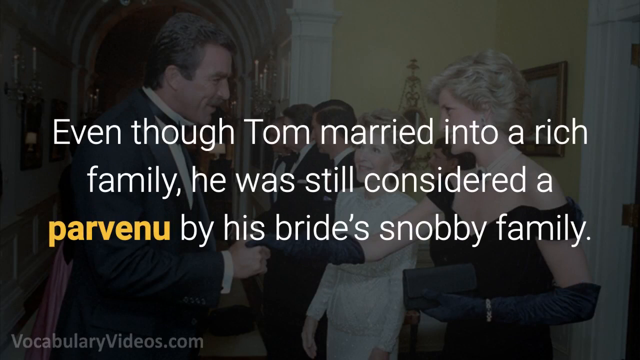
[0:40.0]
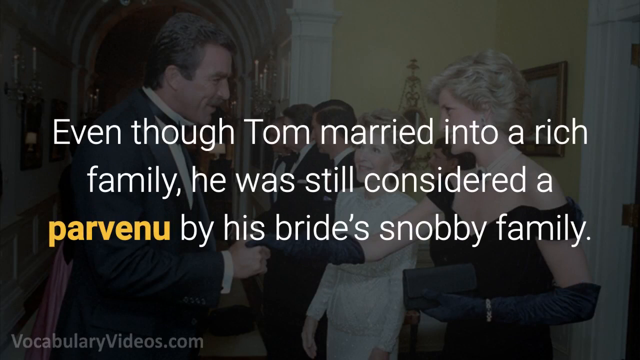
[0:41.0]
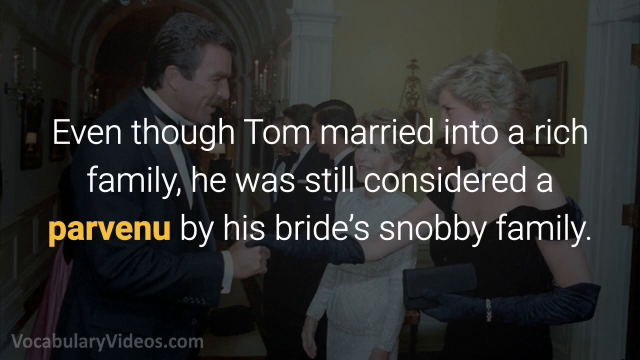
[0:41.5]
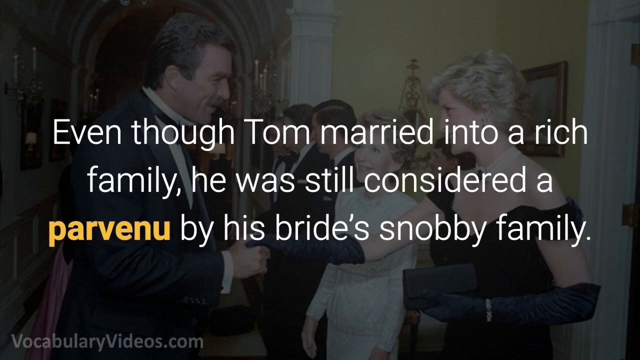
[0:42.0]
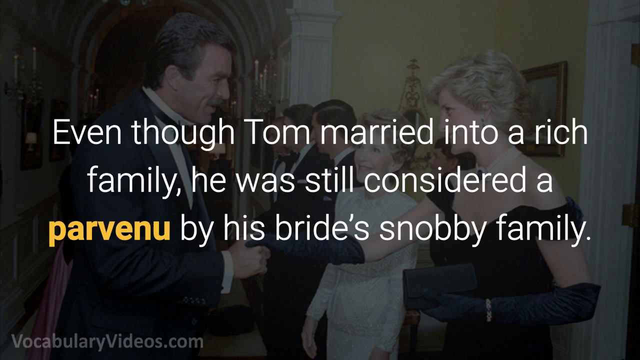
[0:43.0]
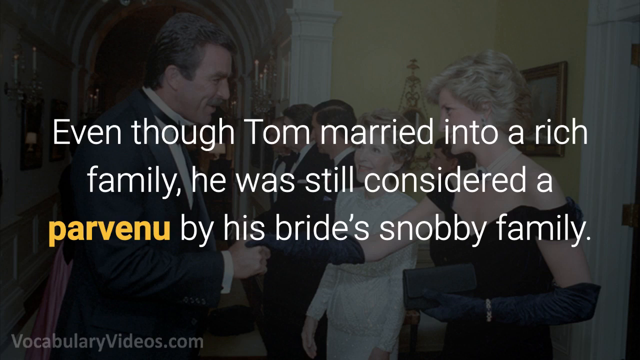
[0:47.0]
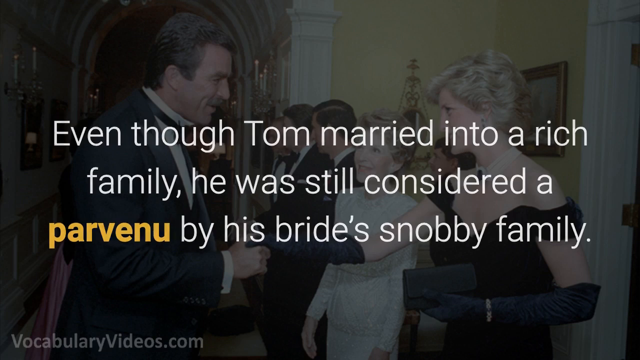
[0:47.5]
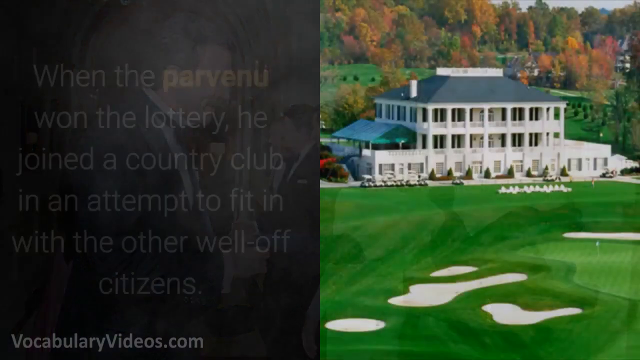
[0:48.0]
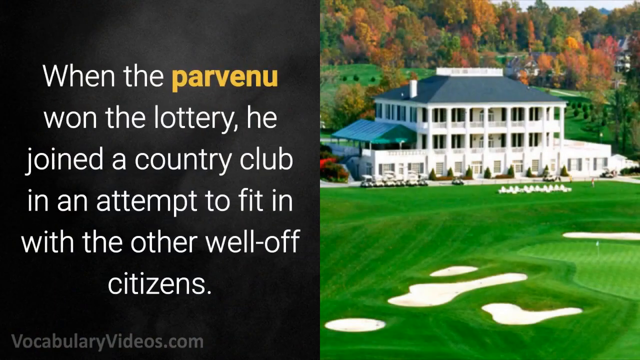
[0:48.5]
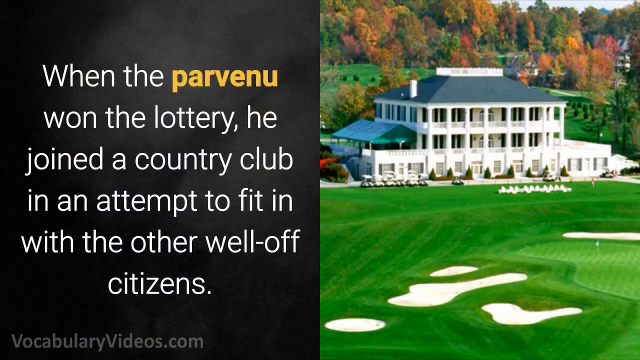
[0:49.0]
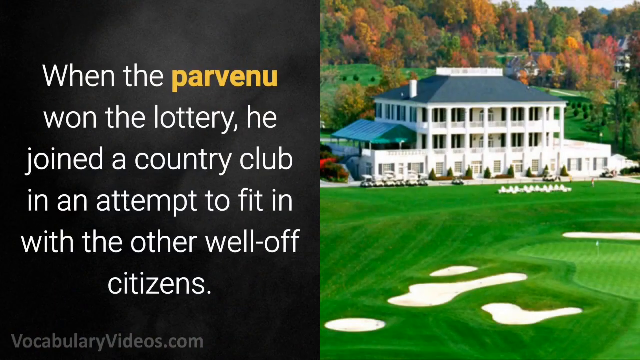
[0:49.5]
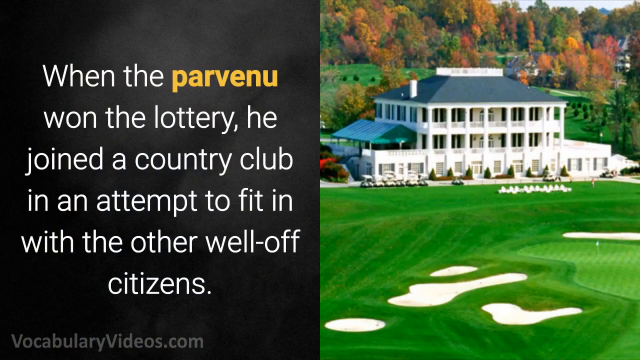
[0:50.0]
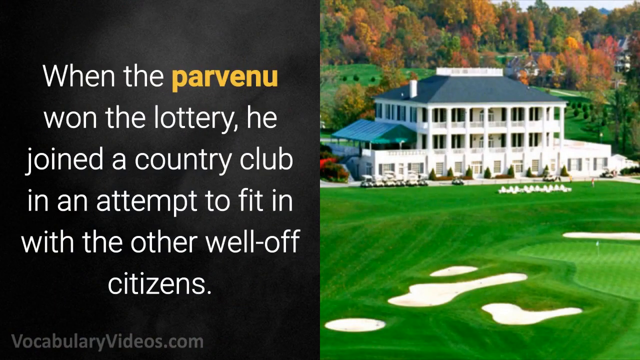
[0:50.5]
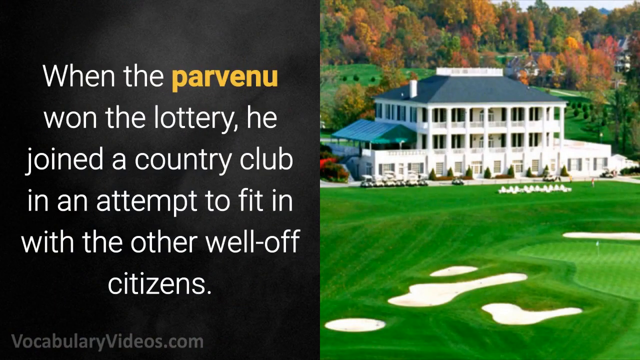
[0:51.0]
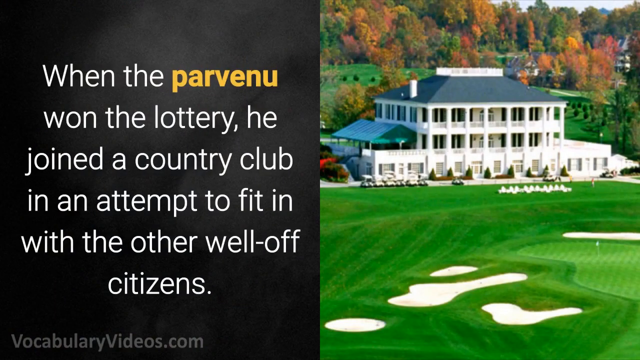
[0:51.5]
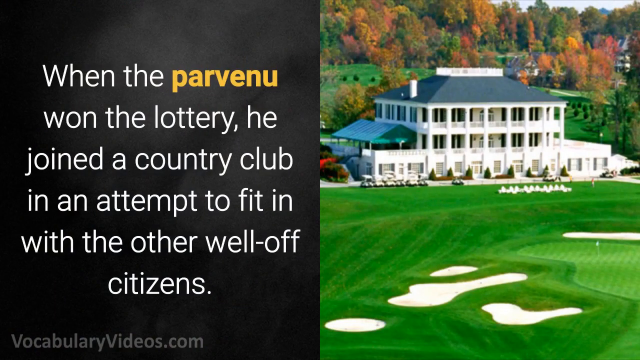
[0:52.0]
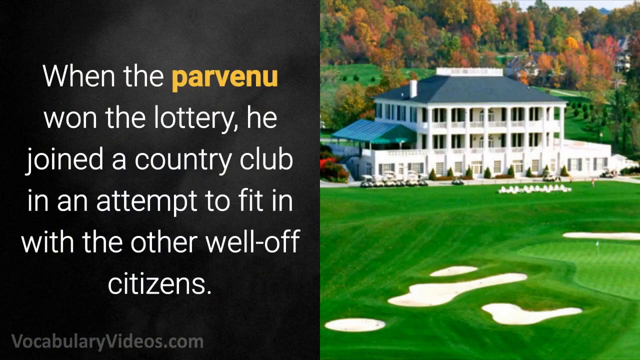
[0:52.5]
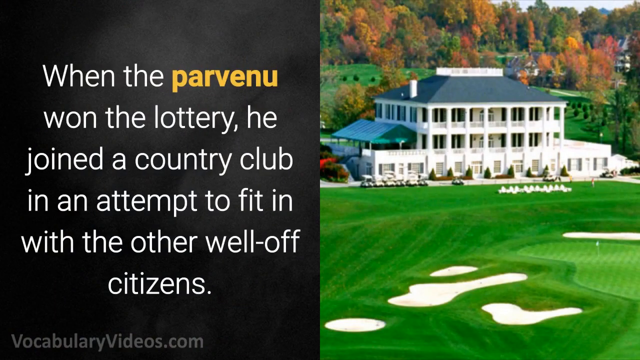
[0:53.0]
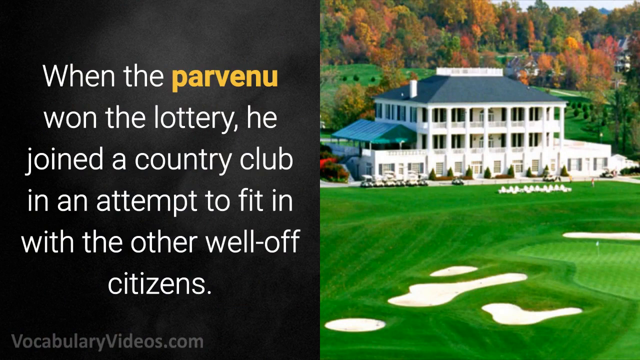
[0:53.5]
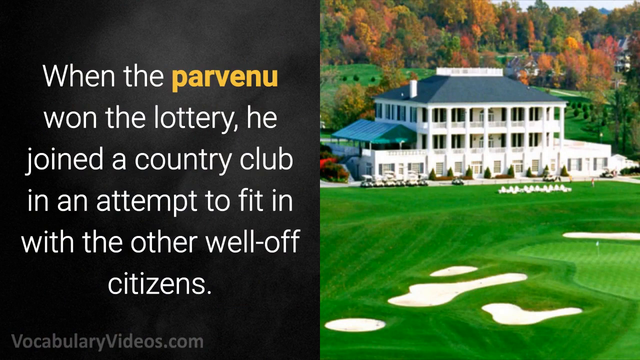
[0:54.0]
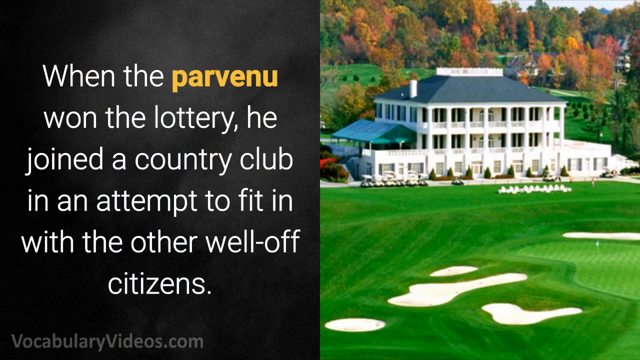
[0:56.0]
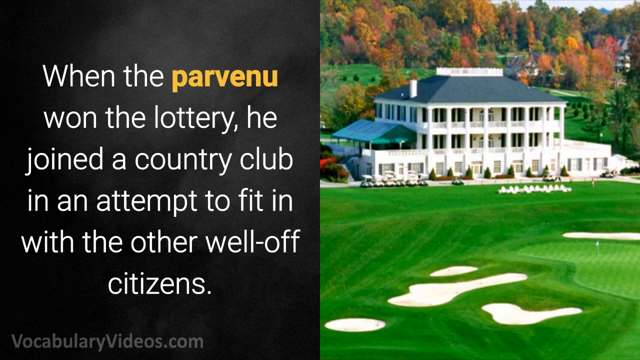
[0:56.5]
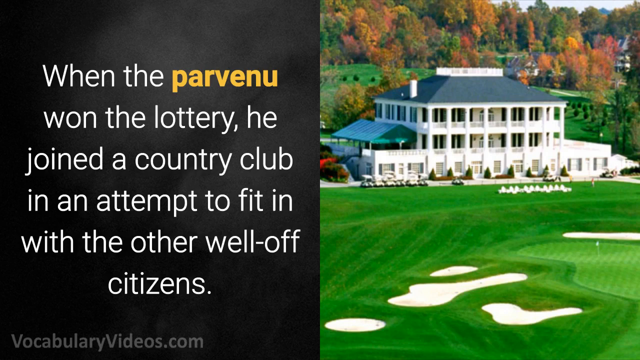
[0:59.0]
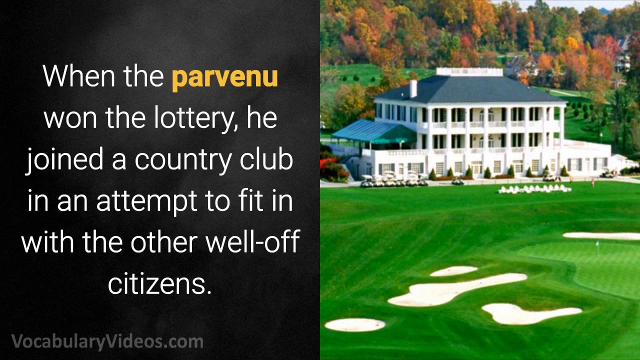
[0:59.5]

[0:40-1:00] The tutorial continues with the word parvenu, spelled p-a-r-v-e-n-u, defined as an individual who moves from a lower economic and social class to a higher one, but crucially while remaining an outsider. Another example follows: when the parvenu won the lottery, he joined a country club in an attempt to fit in with the other well-off citizens.